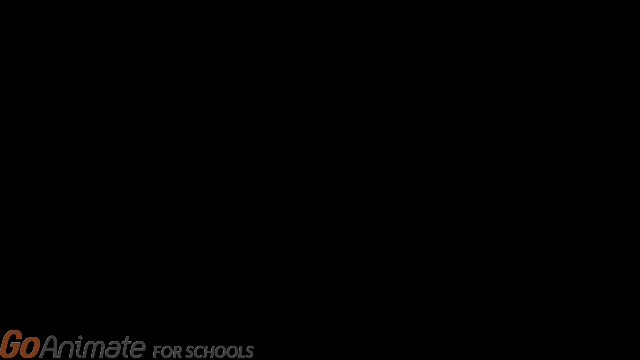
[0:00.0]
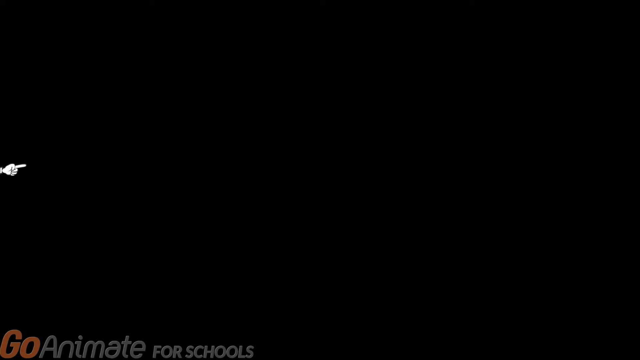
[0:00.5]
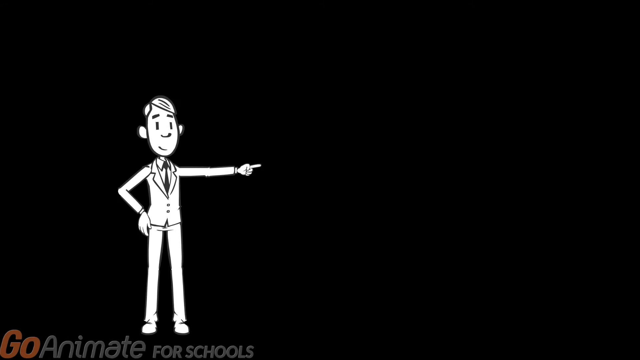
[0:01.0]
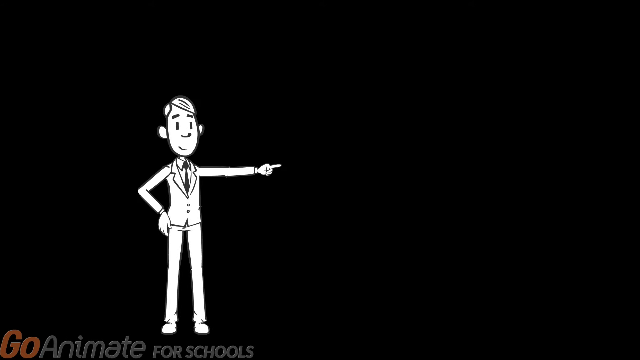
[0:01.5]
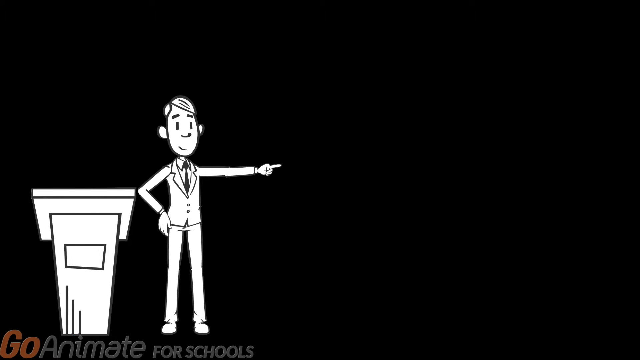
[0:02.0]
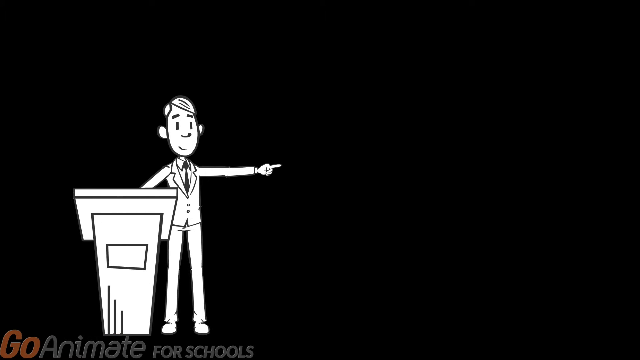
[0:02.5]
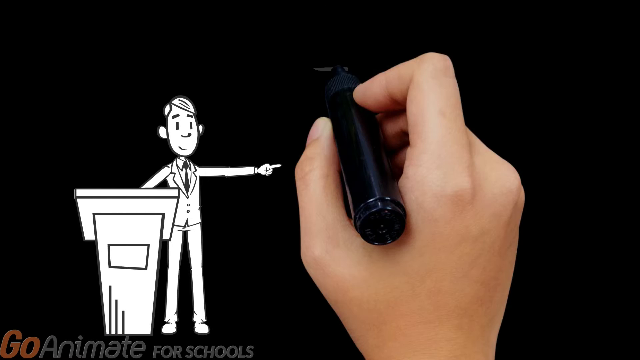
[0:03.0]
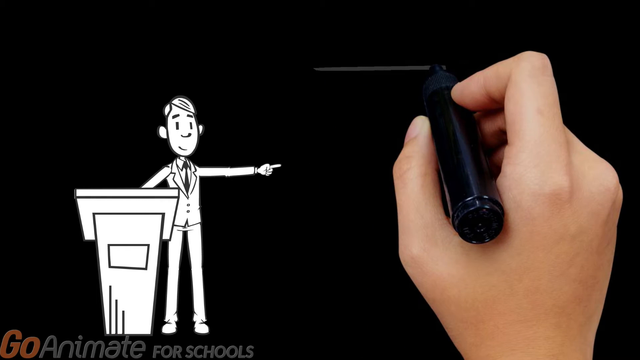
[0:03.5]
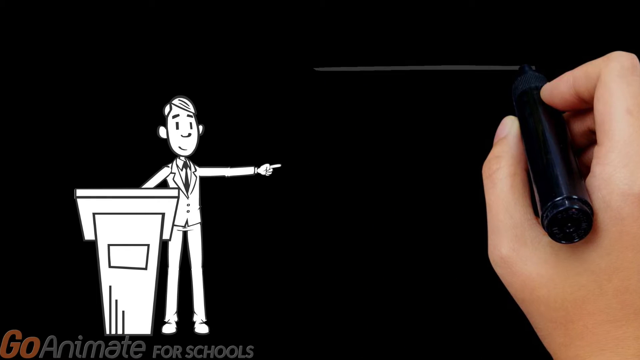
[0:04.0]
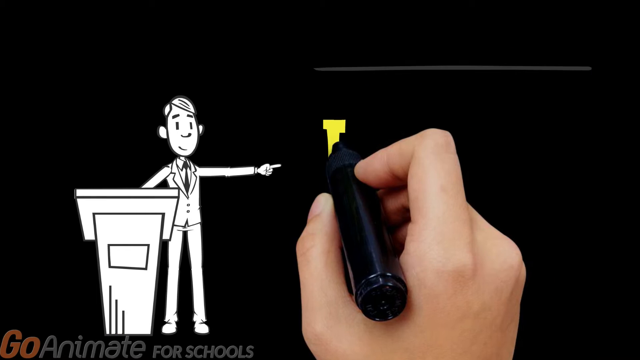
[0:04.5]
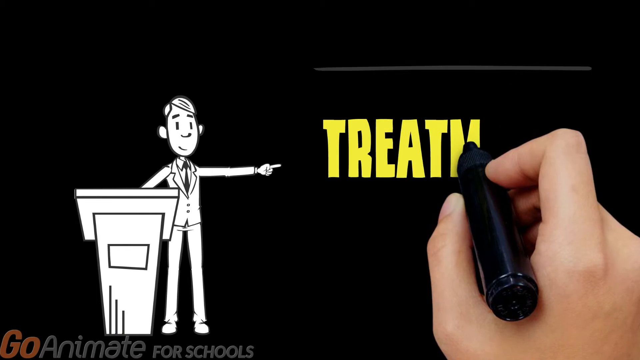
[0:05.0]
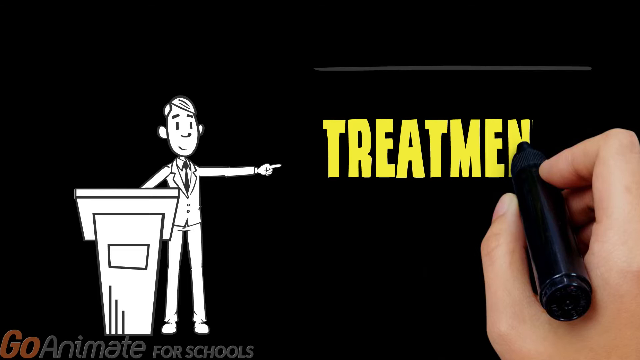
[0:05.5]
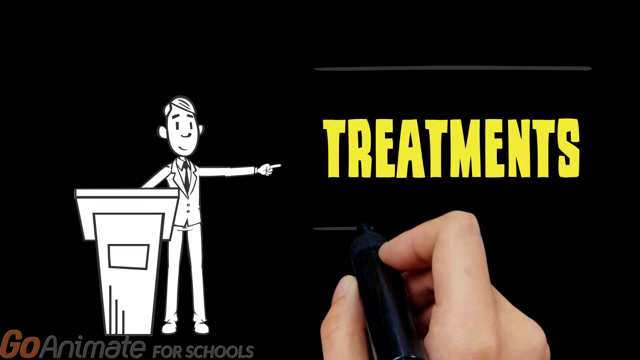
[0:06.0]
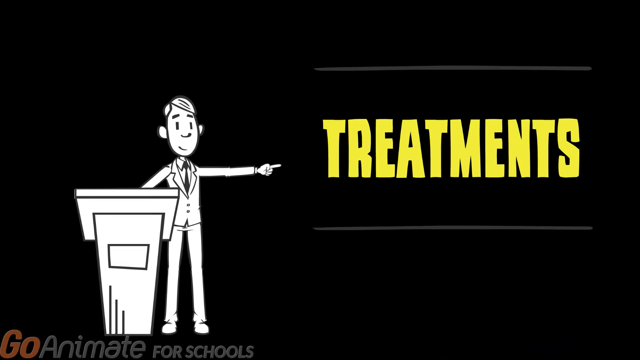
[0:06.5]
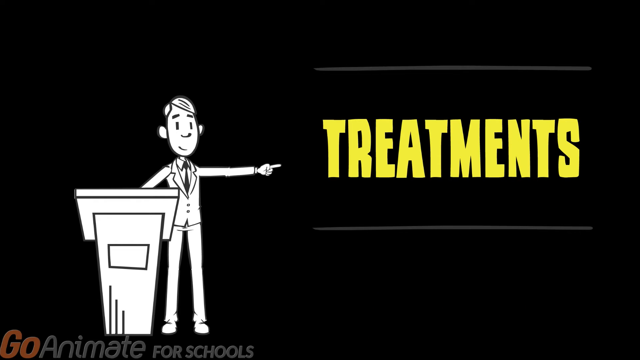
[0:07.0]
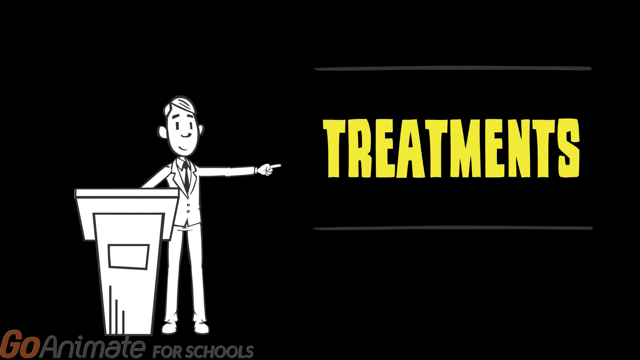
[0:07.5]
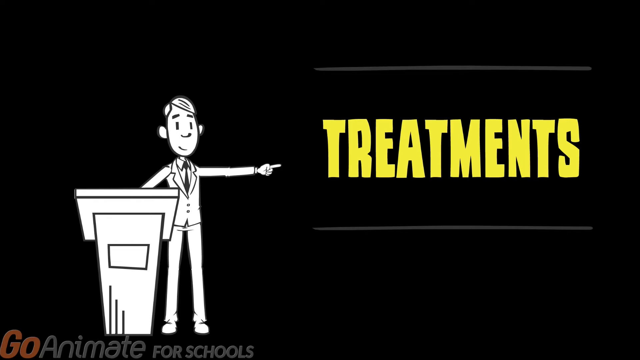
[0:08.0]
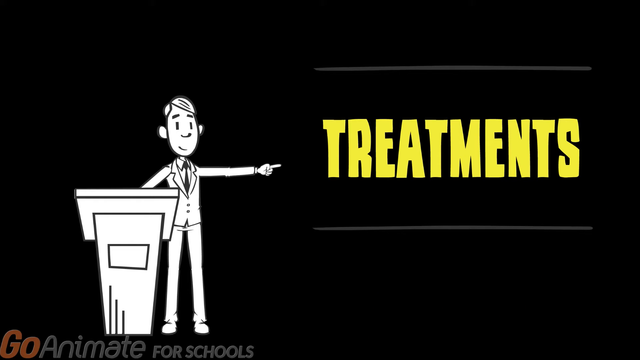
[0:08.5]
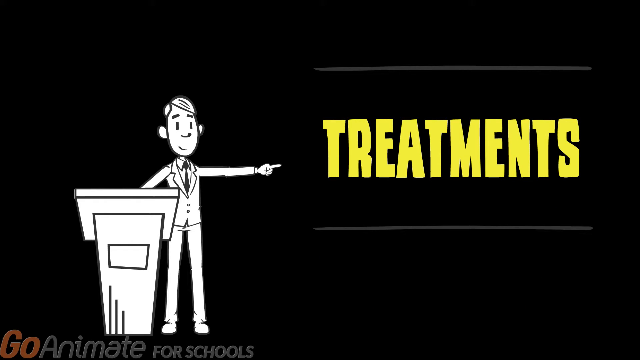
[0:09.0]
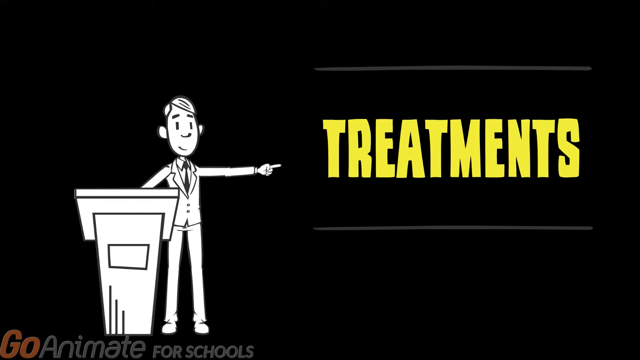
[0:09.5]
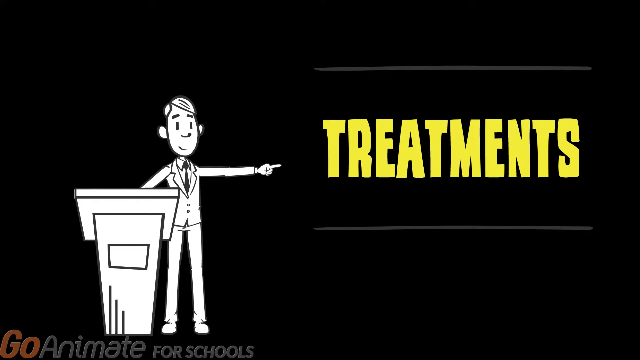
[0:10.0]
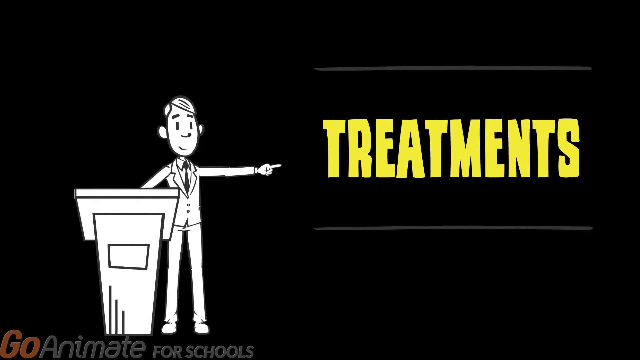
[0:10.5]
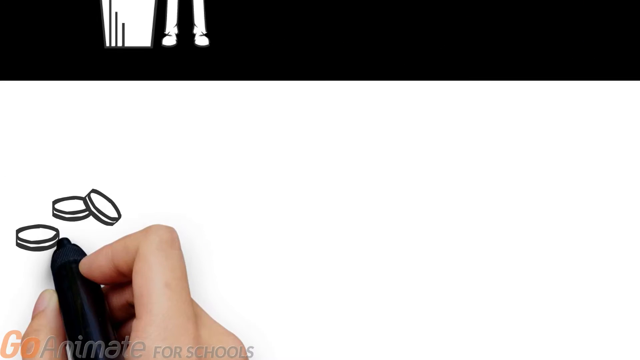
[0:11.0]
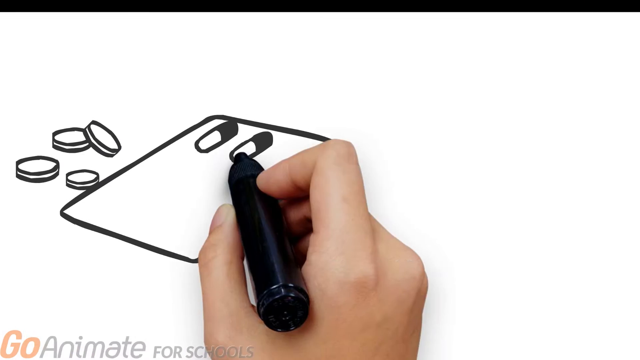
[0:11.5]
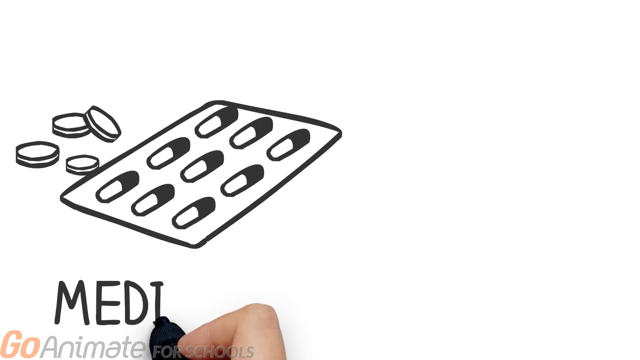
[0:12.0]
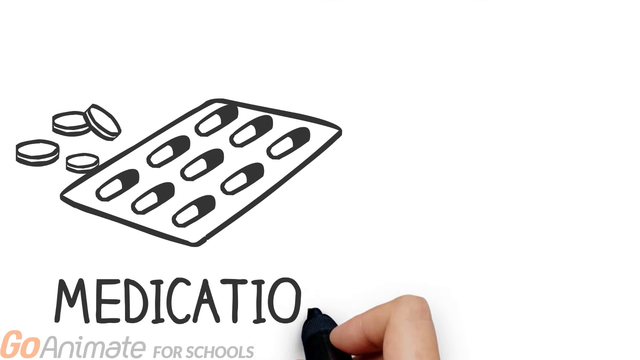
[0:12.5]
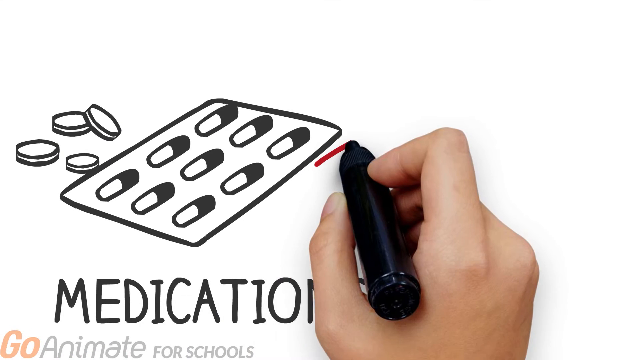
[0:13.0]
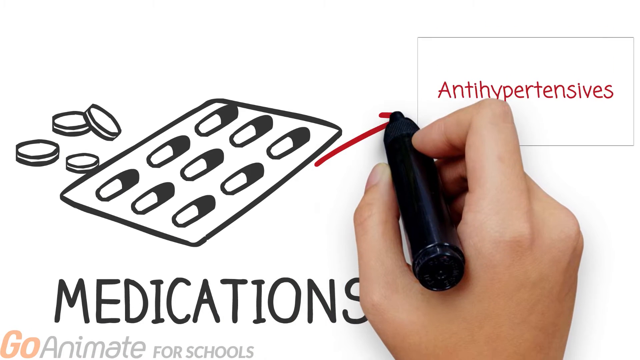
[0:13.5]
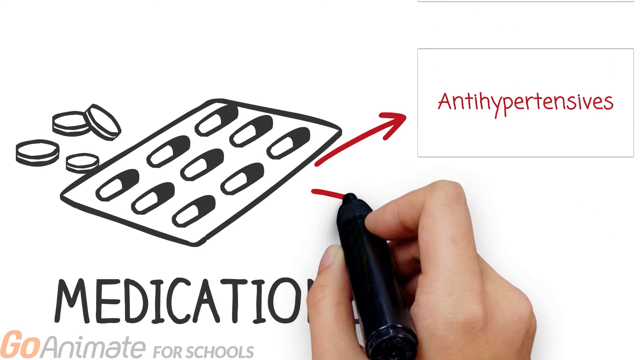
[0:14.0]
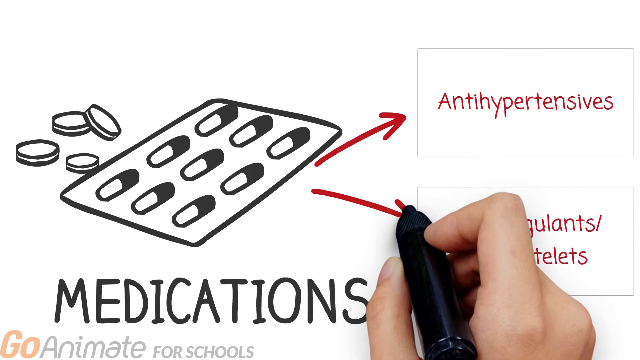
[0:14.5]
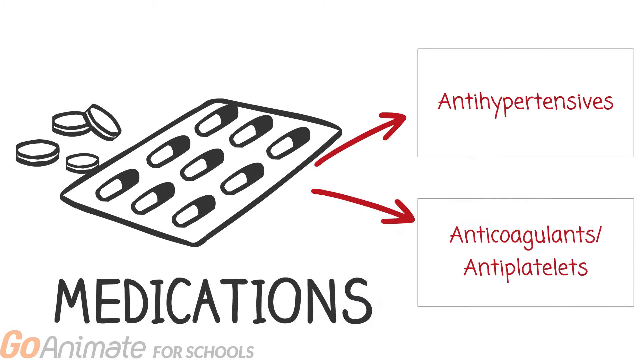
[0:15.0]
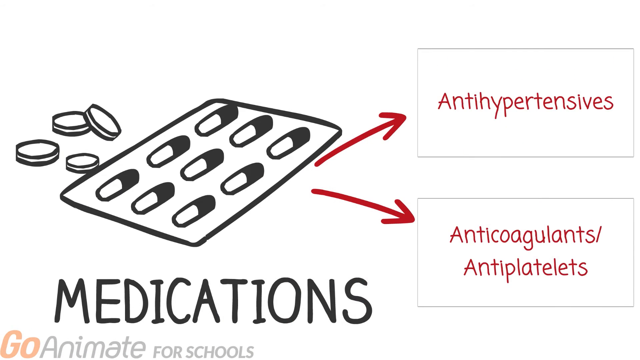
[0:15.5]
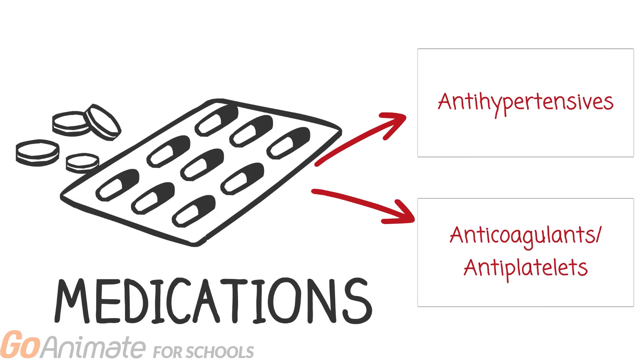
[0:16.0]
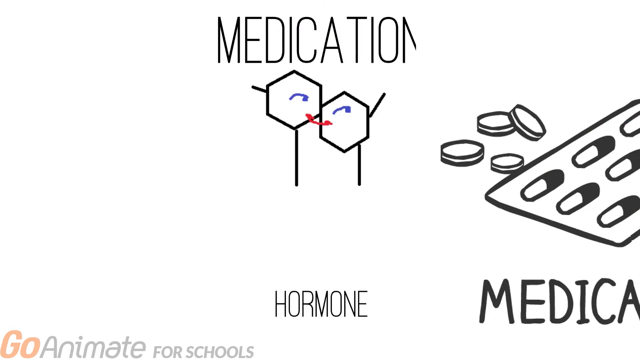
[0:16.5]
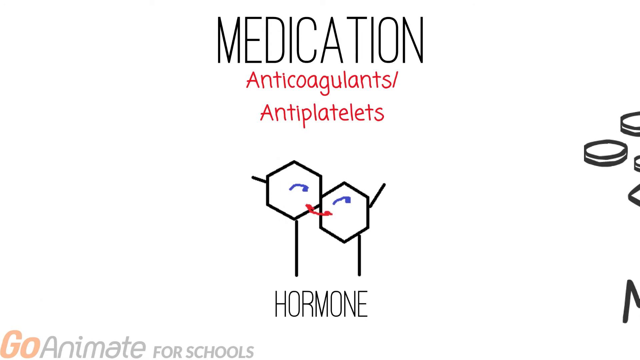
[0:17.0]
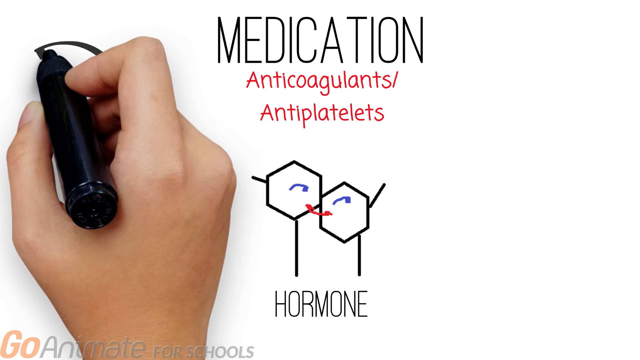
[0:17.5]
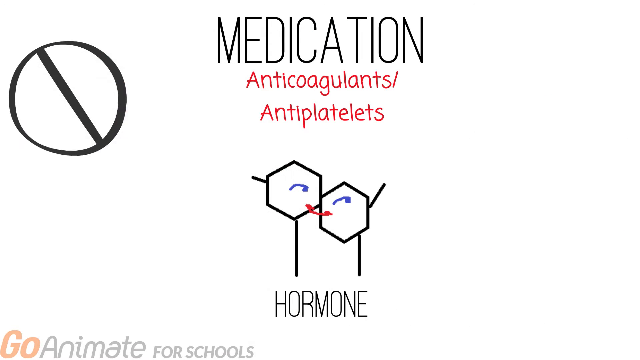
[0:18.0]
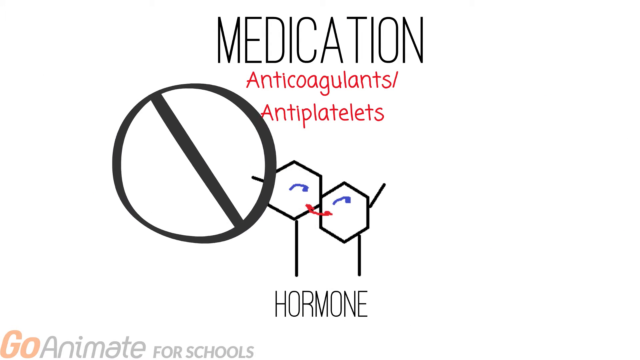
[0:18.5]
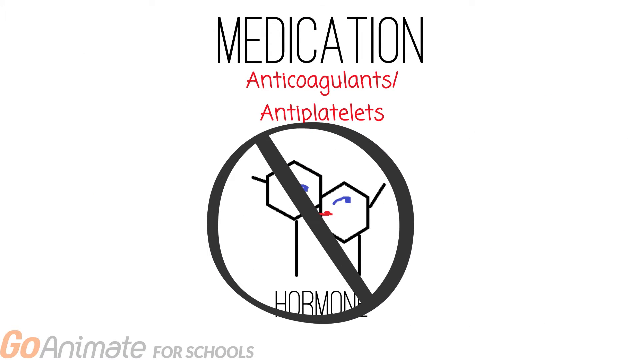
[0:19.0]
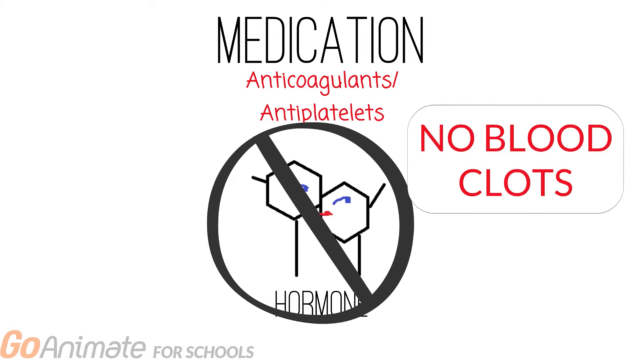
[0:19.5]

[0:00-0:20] A black-and-white cartoon man appears, wearing a white suit with a black outline, a black tie and a white button-up shirt, his hair neatly combed. He points with his left index finger toward the center of the screen. A podium comes out from the right of the screen and moves into the open, and the man now stands behind it with just his right arm, still pointing toward the center of the screen. A human hand comes in and writes "treatments" with a black marker that has yellow ink, then underlines it, in the center right of the screen. The hand then draws a pill packet in the top left of the screen with nine capsules in it, and four tablets that are not in a packet to the side of it. Below them is text that says "medications." Arrows in red marker point to the right of the screen, where text in the top right corner says "antihypertensives" and text in the bottom right corner says "anticoagulants and antiplatelets." The next screen has "medication" written in large font in the middle, with "anticoagulants and antiplatelets" under it, and two cartoon characters with octagonal-shaped heads, eyes and red lips kissing each other. The human hand, now on the left of the screen, writes with a black marker with black ink and draws a black circle with a slash through it over the kissing characters. Then "no blood clots" appears in large font in the bottom right corner of the screen.